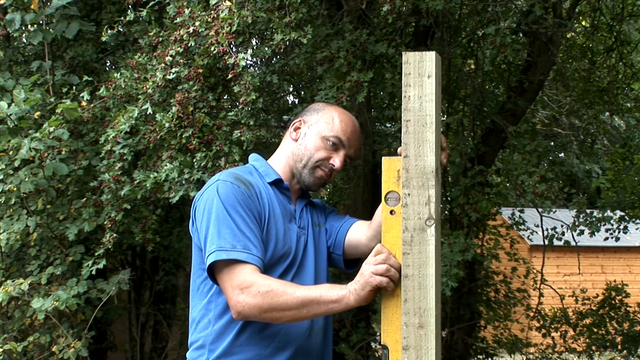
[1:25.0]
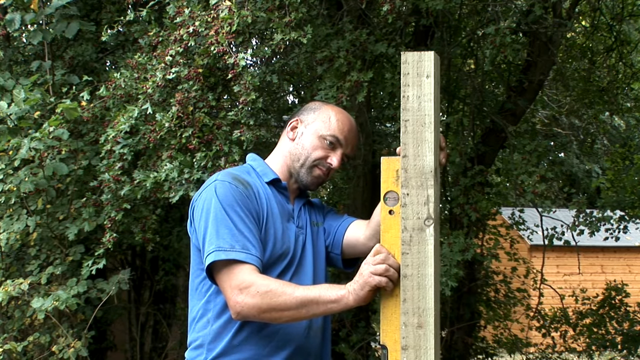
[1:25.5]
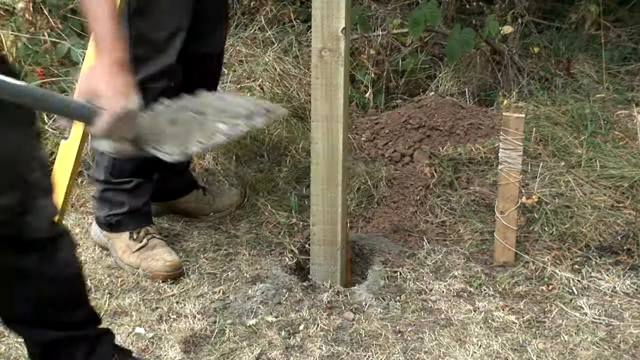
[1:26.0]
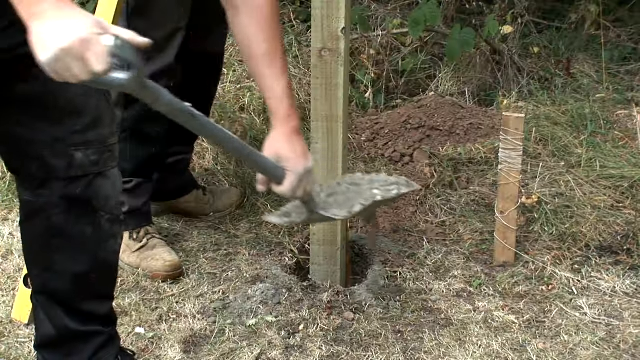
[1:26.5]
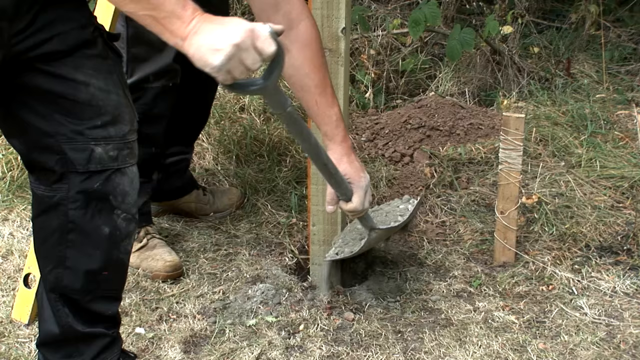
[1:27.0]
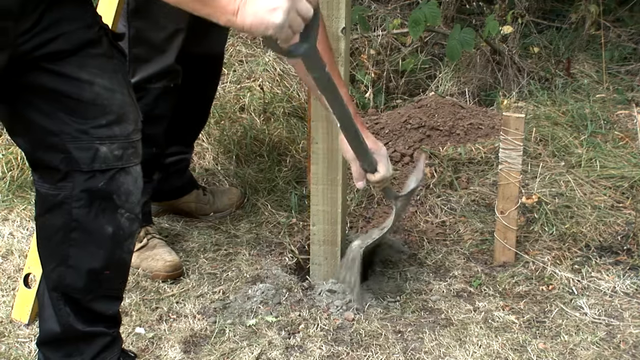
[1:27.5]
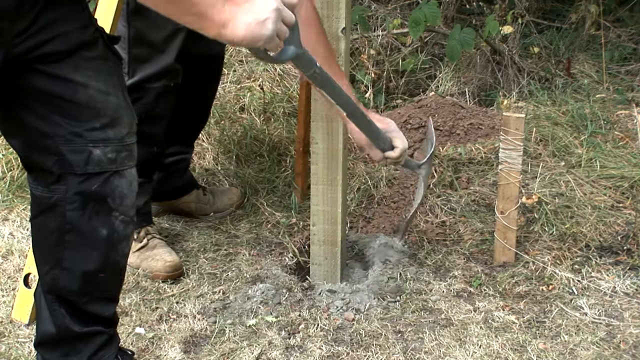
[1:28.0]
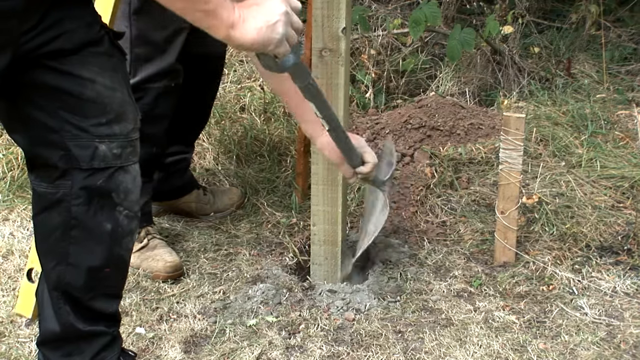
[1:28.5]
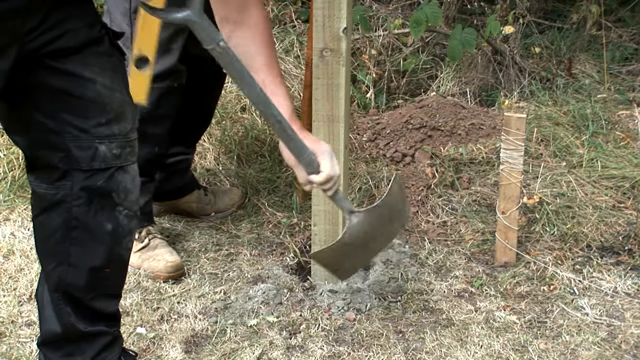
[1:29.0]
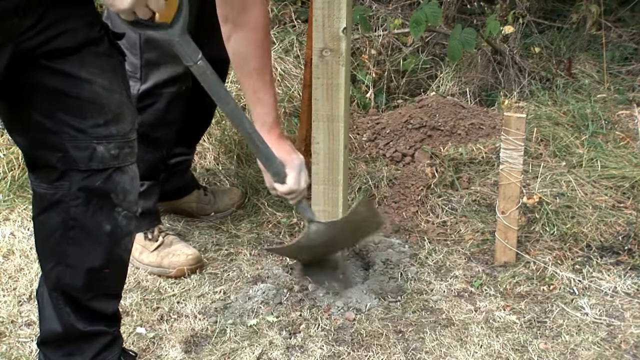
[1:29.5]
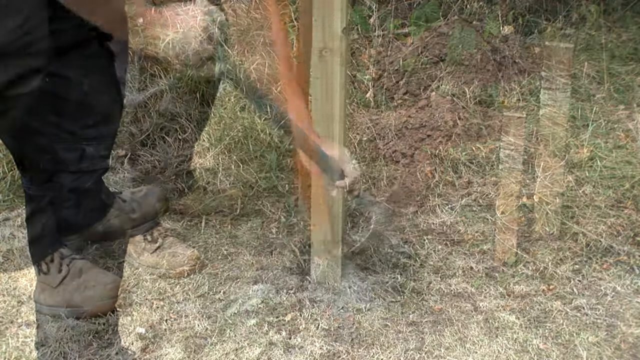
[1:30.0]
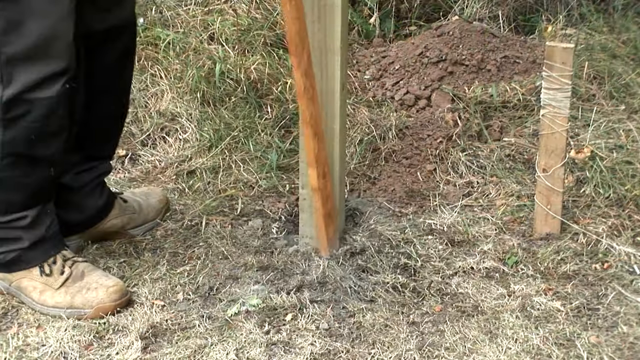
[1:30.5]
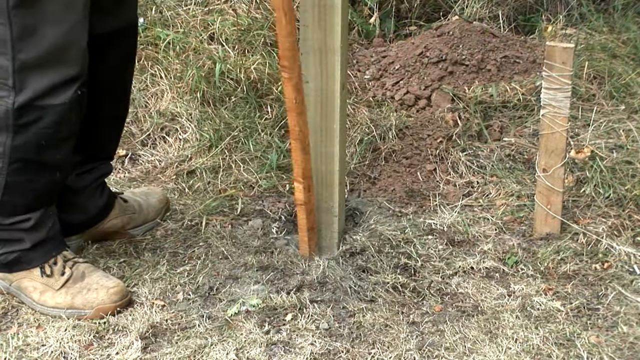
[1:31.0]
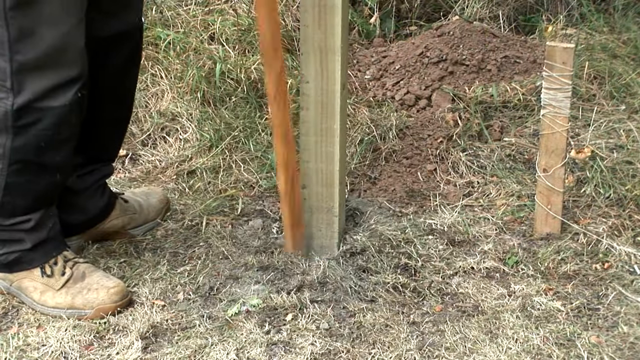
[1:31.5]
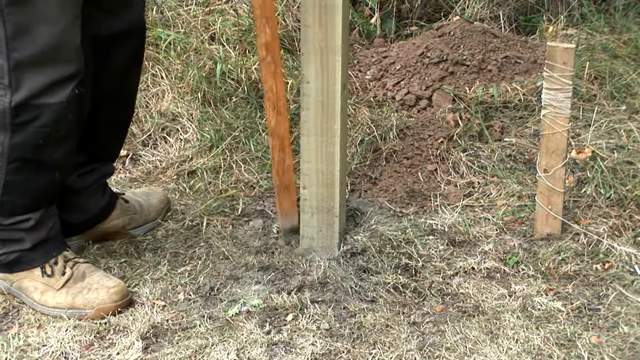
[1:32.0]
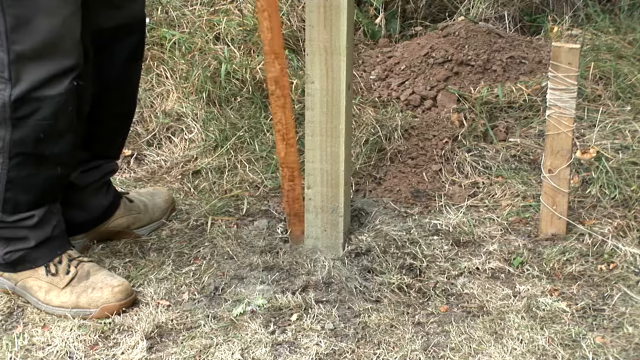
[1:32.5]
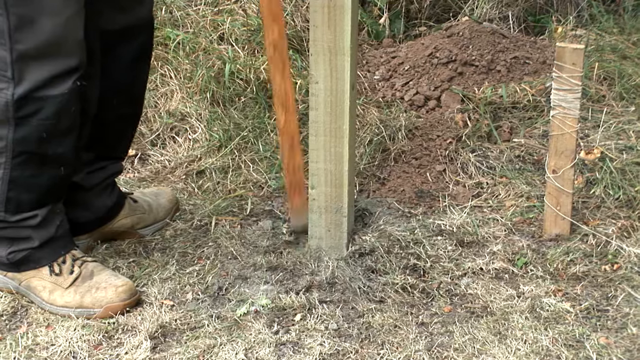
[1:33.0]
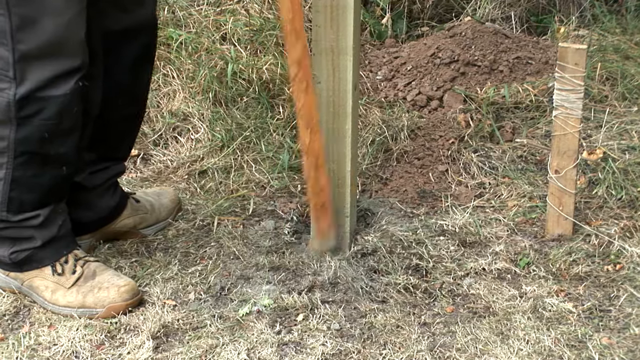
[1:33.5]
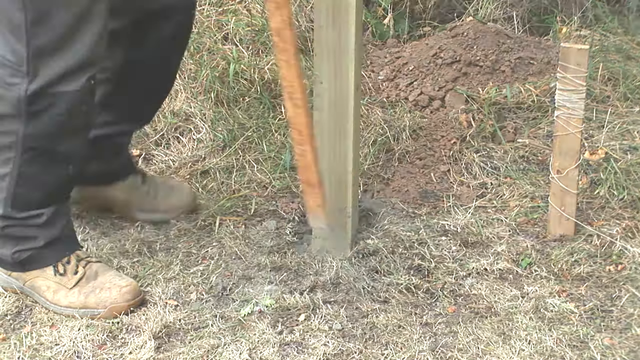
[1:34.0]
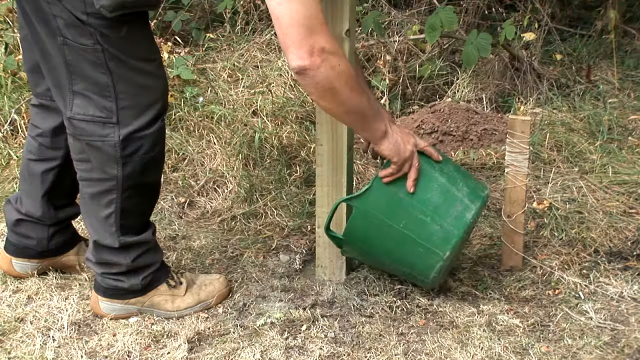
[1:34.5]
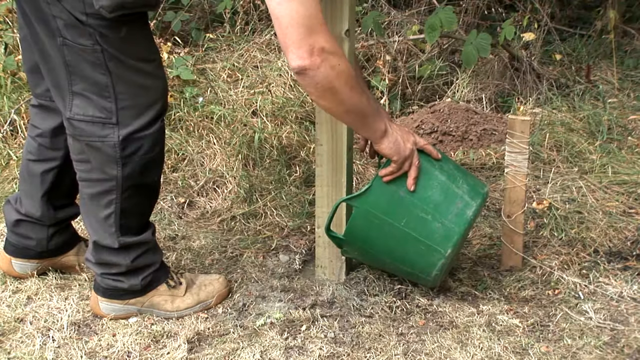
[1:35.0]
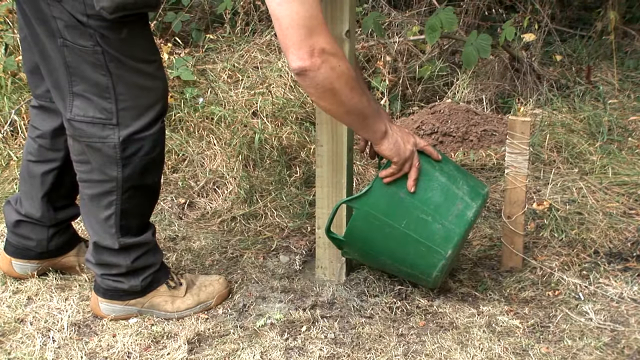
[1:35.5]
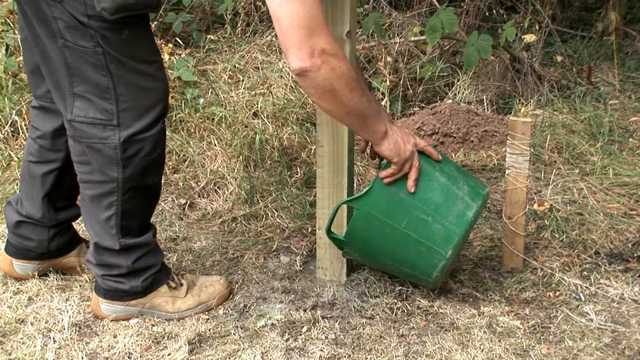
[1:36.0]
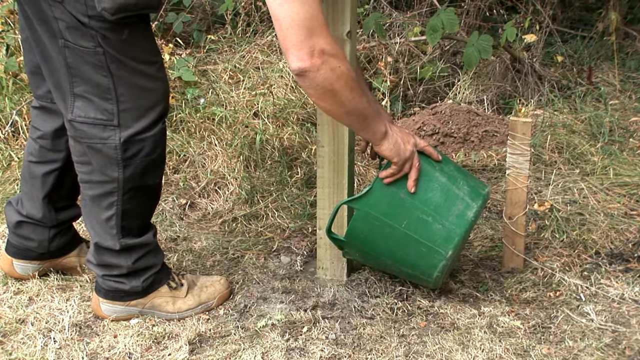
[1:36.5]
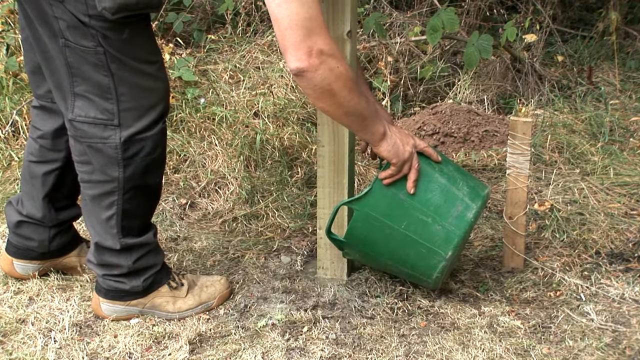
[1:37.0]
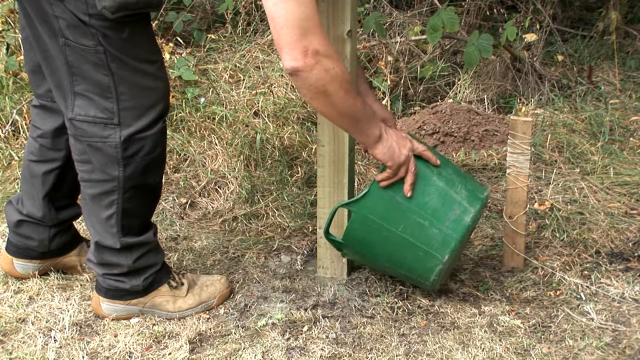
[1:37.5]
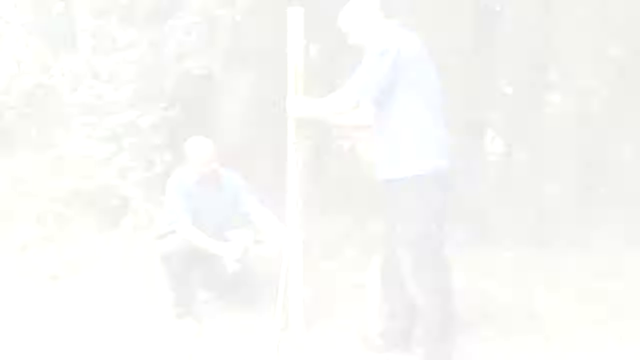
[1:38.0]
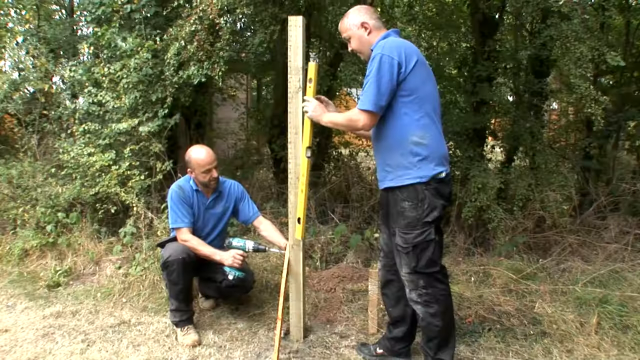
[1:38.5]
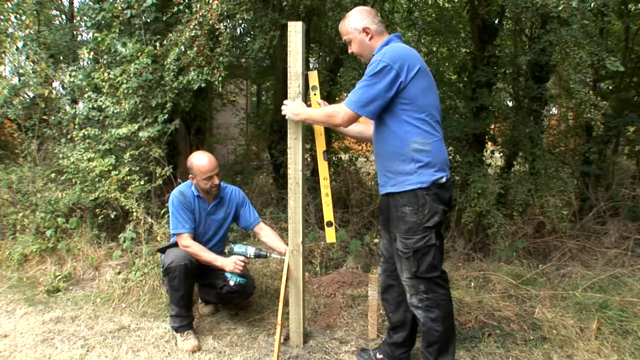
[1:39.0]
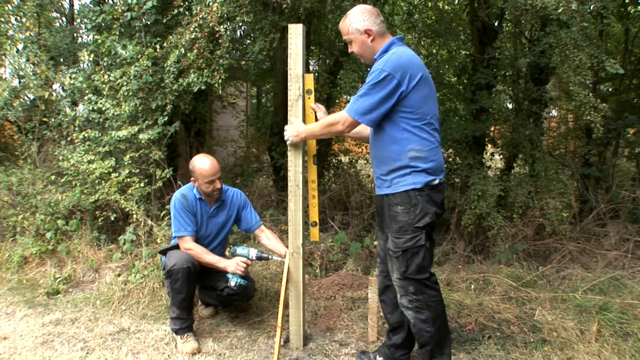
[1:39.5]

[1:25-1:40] A man stands holding a wooden fence post in the freshly dug hole, holding an orangish-yellow level against it to make sure it is straight up and down and left and right. Another man in black pants and black boots shovels dirt into the hole, firming up the post. A man with a green bucket pours water into the hole, and the other man then shovels dry concrete into it. Once it is done, a man in a blue shirt holds up a yellow level to make sure the post is straight up and down and left and right.